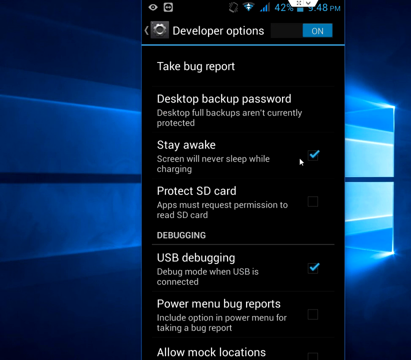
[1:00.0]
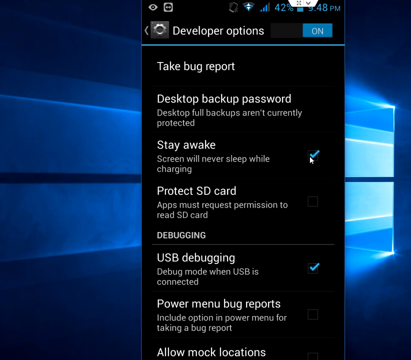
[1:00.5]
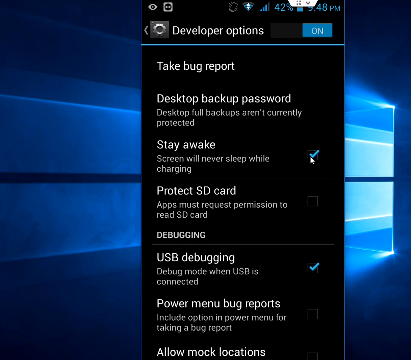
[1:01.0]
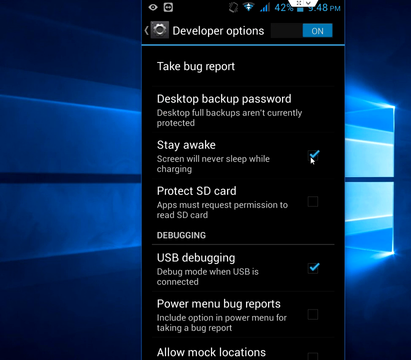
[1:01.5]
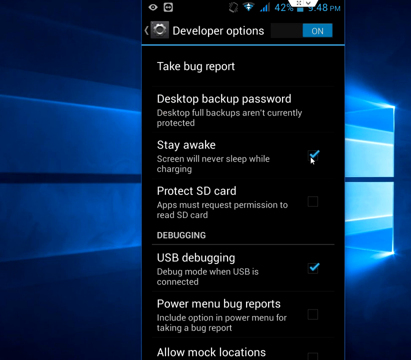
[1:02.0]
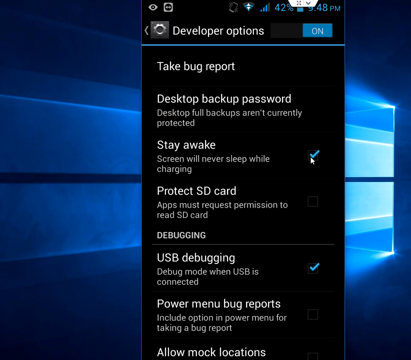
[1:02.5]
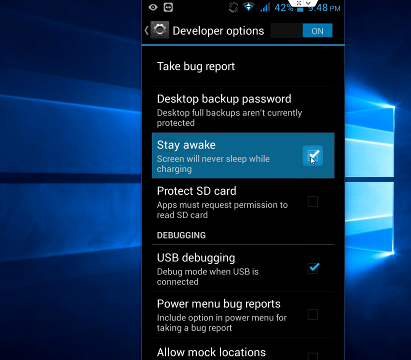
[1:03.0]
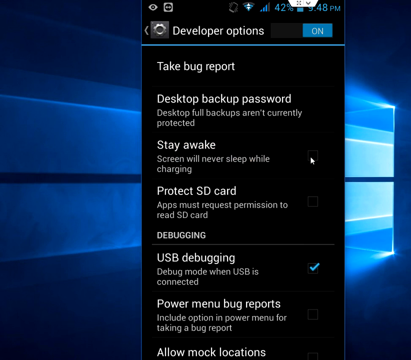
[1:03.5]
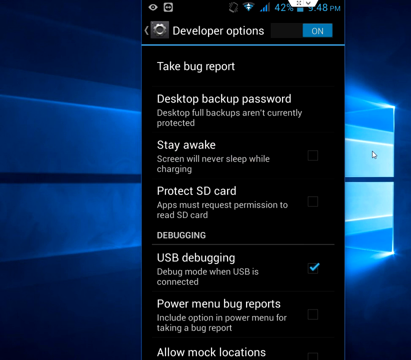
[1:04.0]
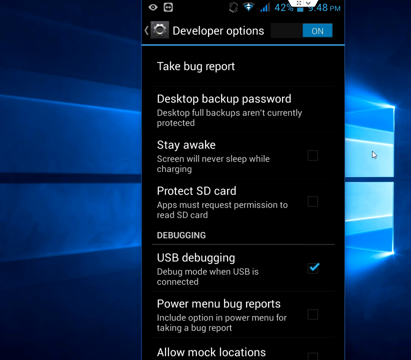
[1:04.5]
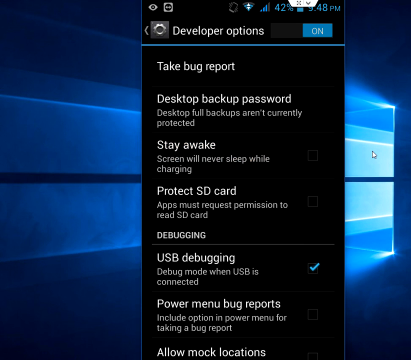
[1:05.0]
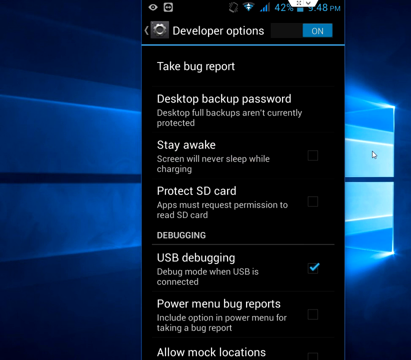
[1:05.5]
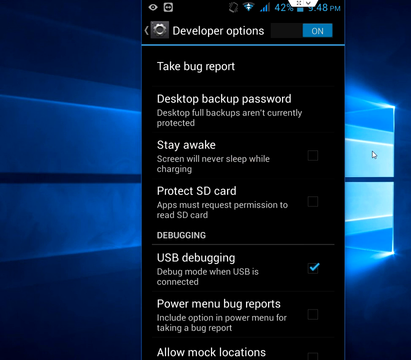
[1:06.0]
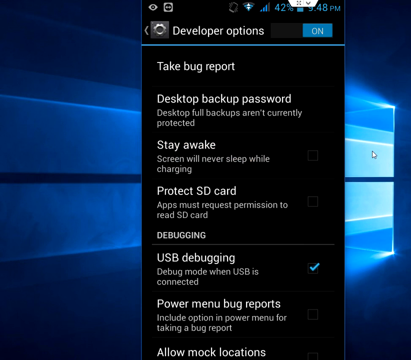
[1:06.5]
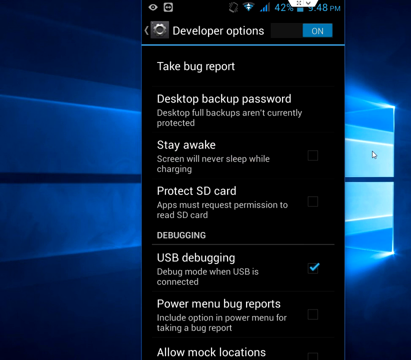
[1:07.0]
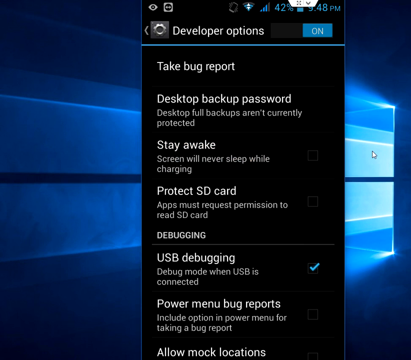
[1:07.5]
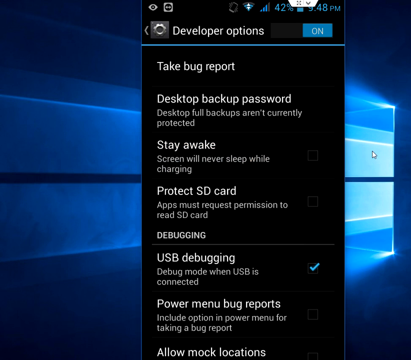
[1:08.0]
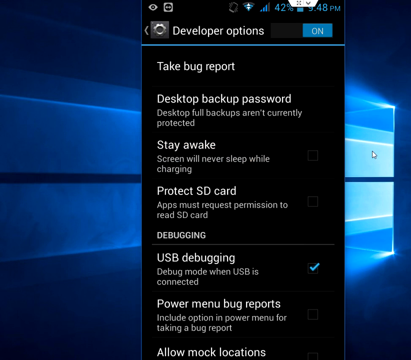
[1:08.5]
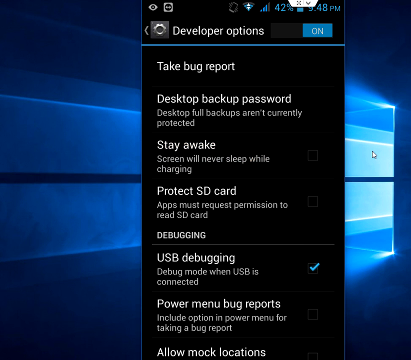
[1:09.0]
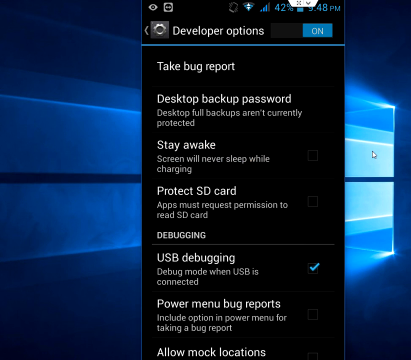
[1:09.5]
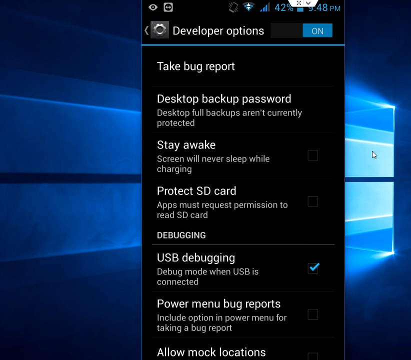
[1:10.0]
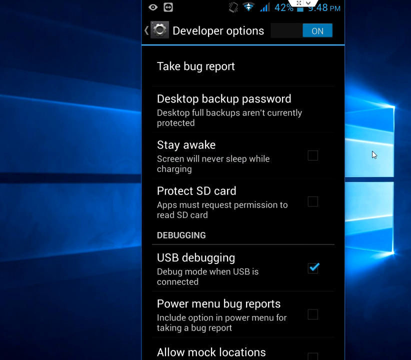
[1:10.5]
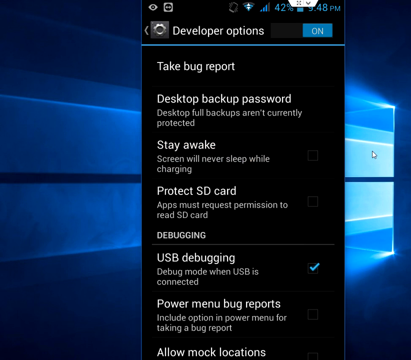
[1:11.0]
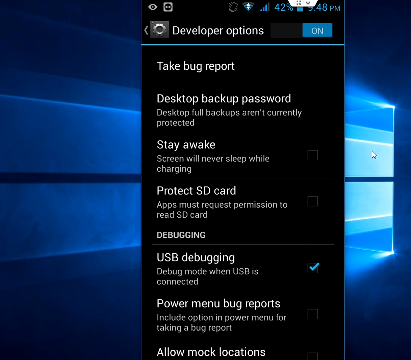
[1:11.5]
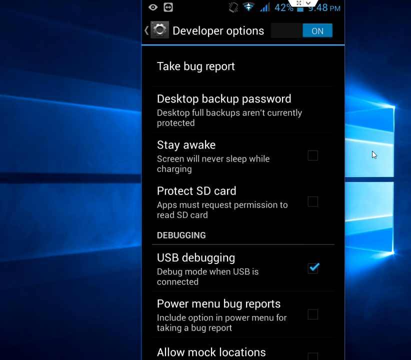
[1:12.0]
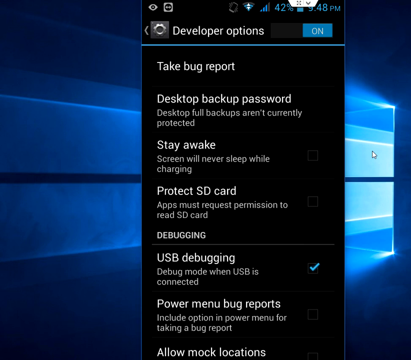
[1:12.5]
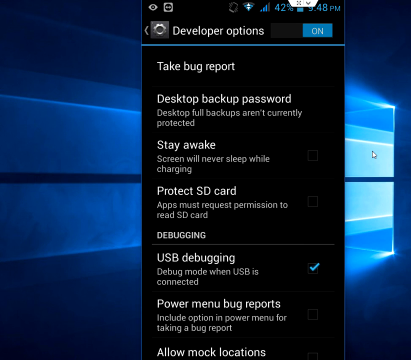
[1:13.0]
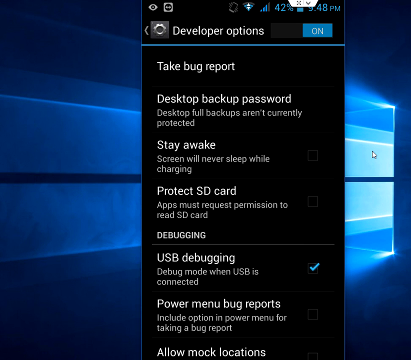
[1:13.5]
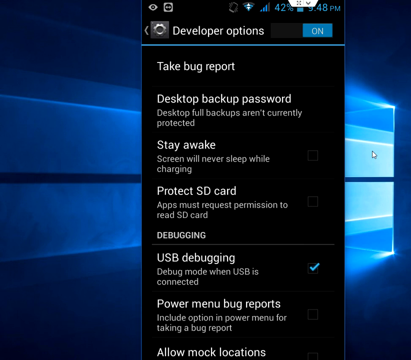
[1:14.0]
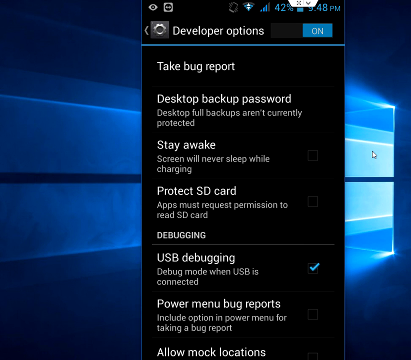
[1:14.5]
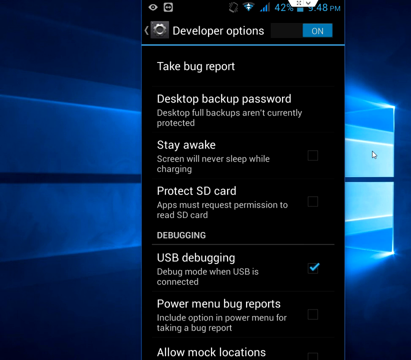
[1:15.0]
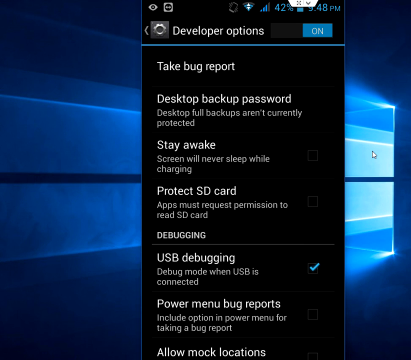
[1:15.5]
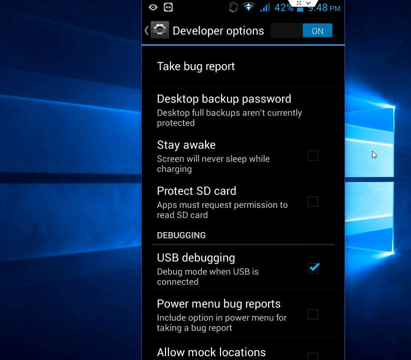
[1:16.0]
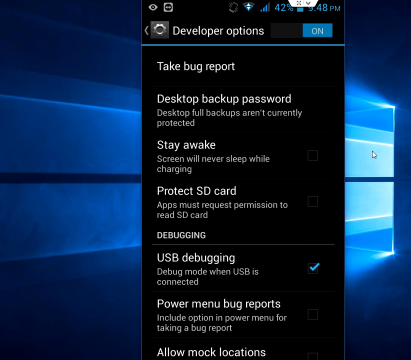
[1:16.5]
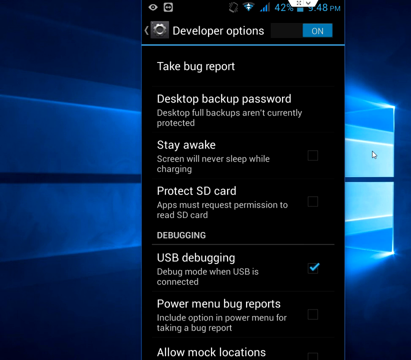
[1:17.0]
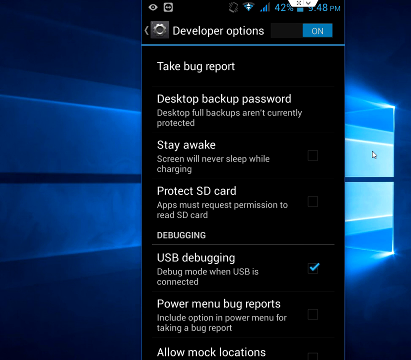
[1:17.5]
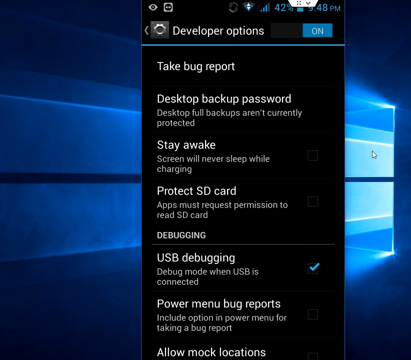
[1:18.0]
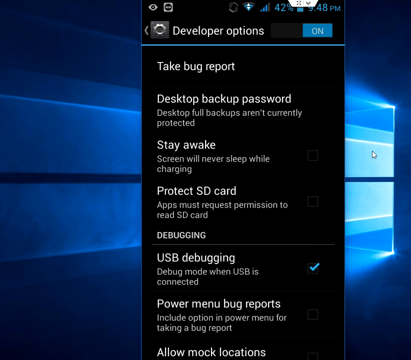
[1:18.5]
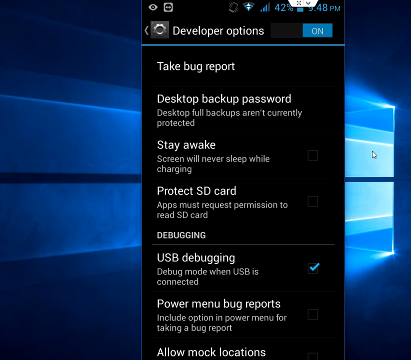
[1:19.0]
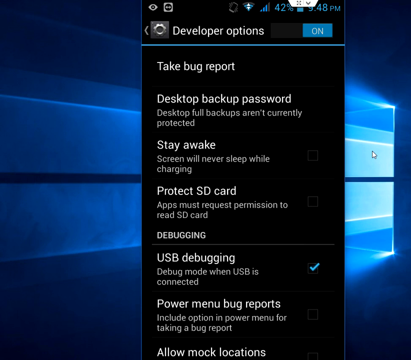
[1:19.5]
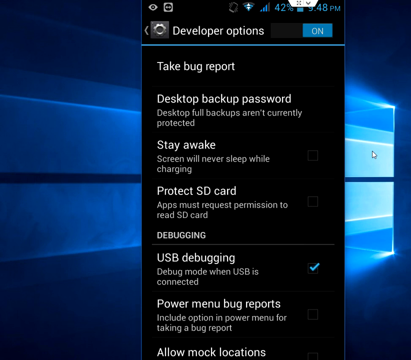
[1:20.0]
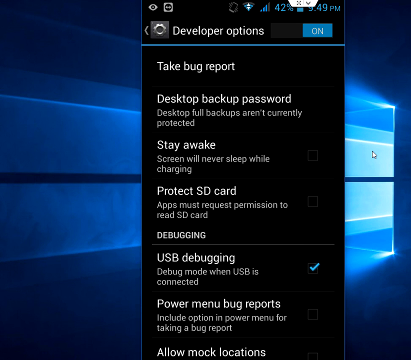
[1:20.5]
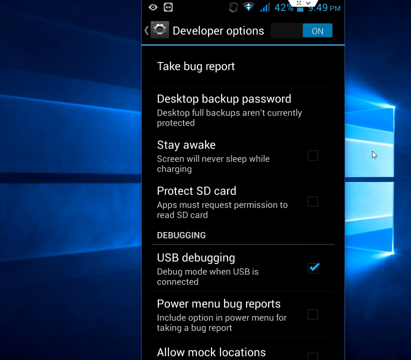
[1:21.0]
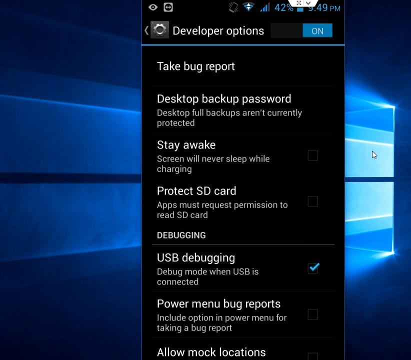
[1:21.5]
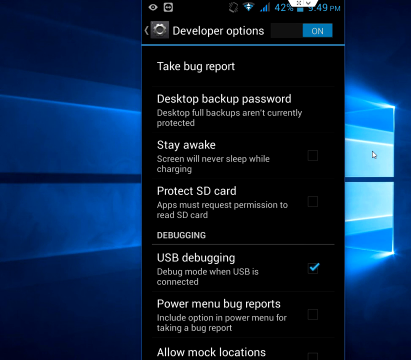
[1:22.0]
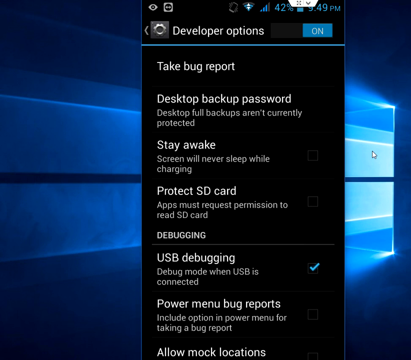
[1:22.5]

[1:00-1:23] The mouse clicks on the teal checkmark beside the "Stay Awake" option. The teal checkmark disappears and in its place is a very faint, almost hard to see grey outline of an unchecked check box, disabling the stay awake option. The mouse quickly moves outside the window with the black background to the right-hand side of the screen, where the blue background, made up of many different shades of blue, is visible. The mouse stays there for the remainder of the video with no movement, and the screen remains unchanged.